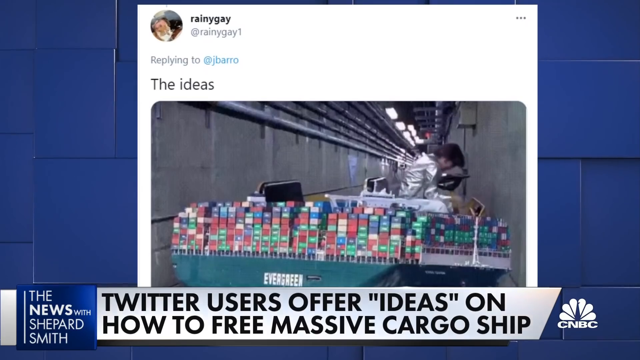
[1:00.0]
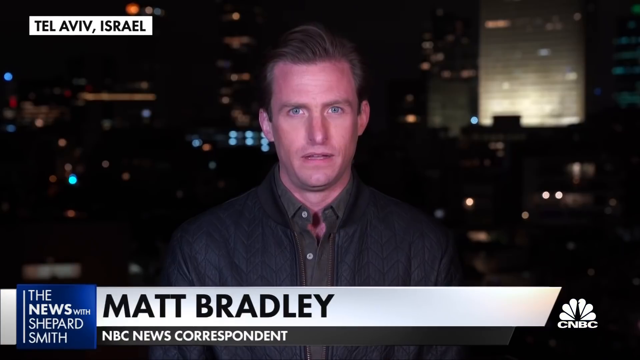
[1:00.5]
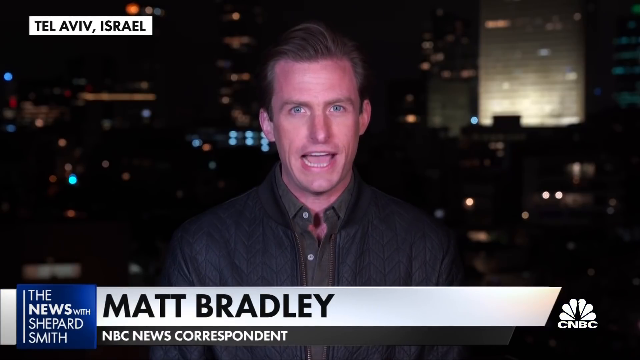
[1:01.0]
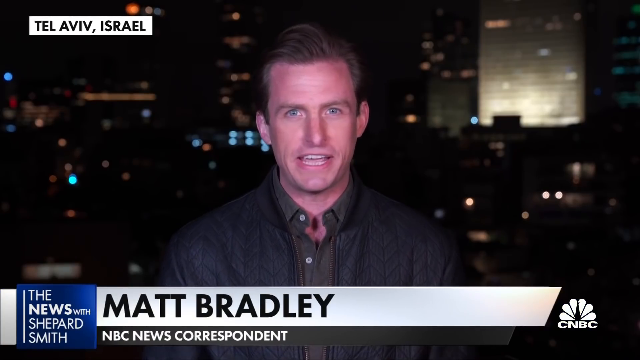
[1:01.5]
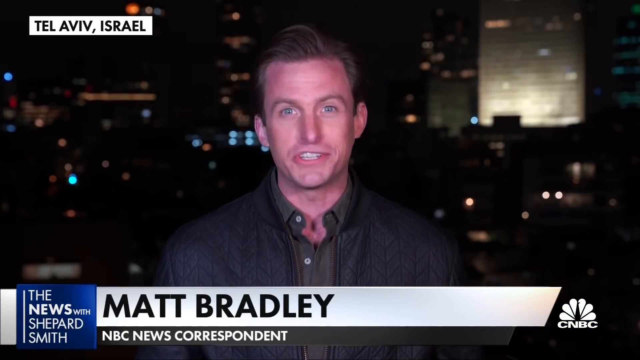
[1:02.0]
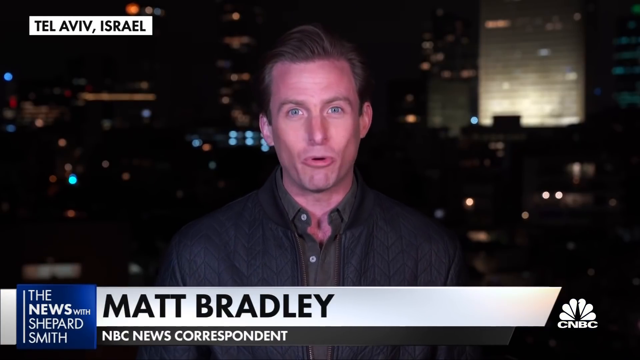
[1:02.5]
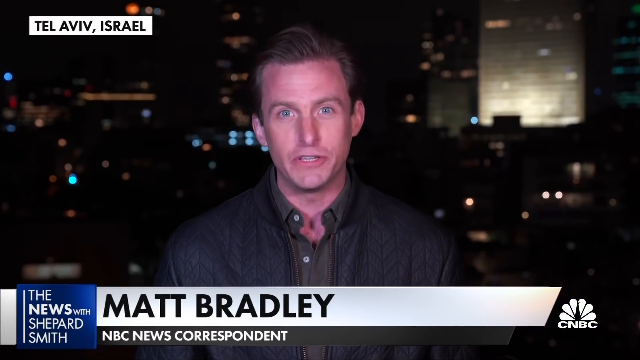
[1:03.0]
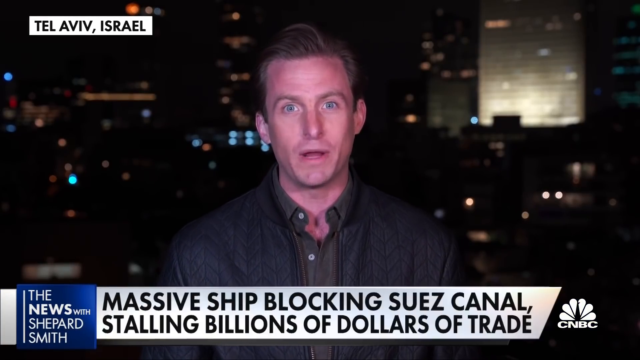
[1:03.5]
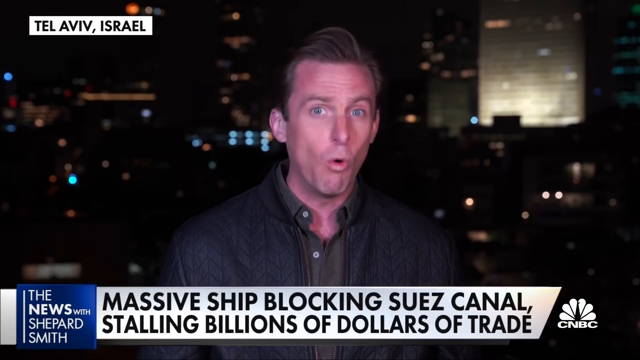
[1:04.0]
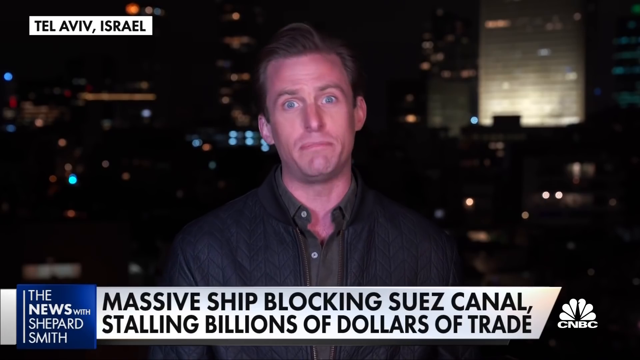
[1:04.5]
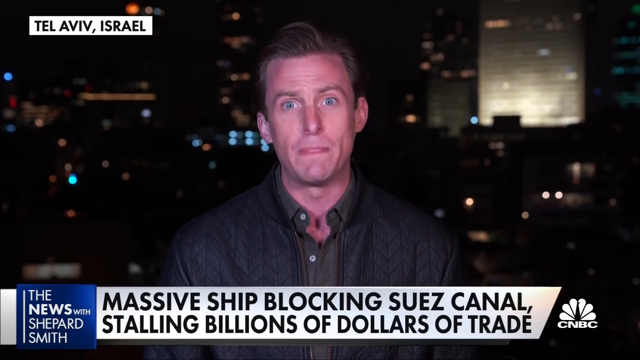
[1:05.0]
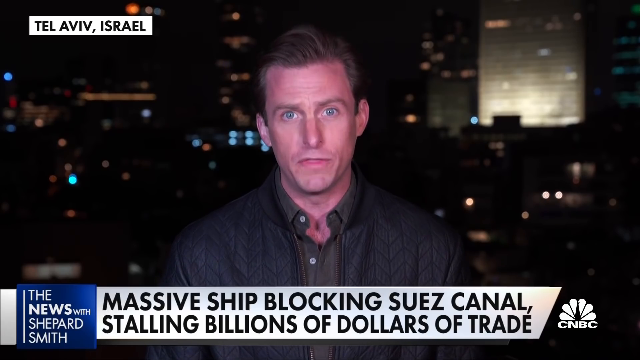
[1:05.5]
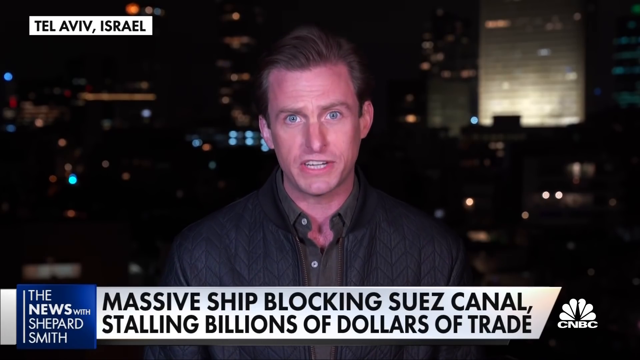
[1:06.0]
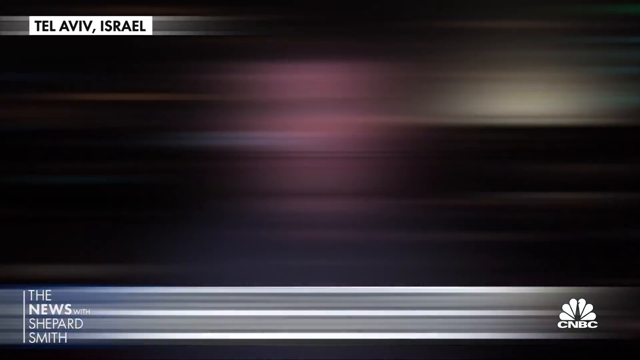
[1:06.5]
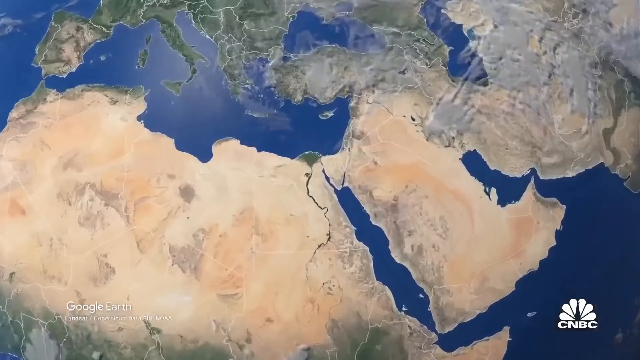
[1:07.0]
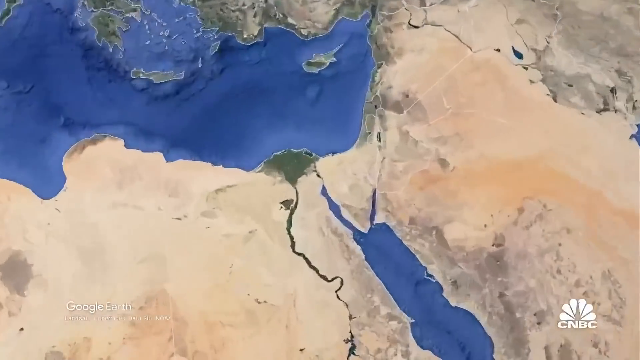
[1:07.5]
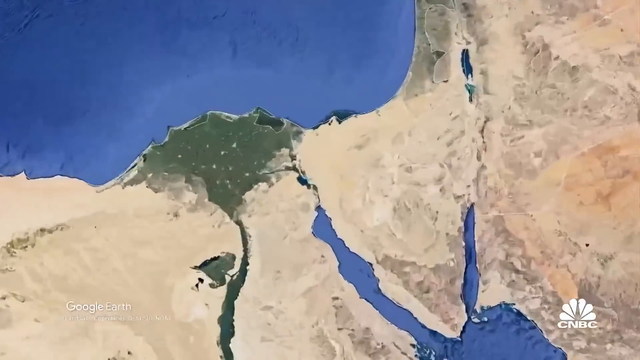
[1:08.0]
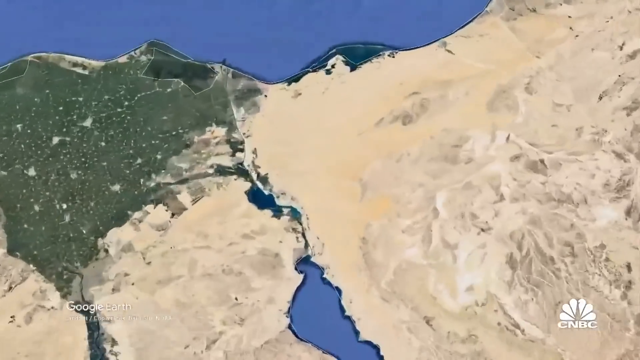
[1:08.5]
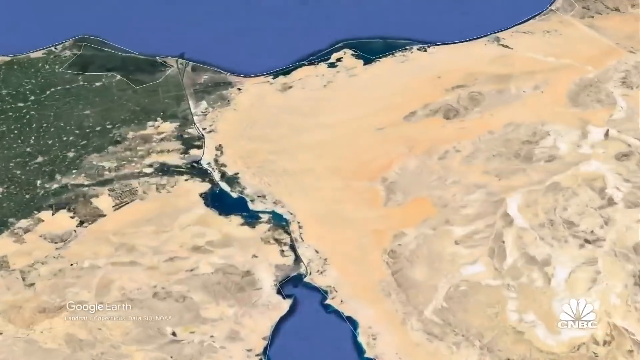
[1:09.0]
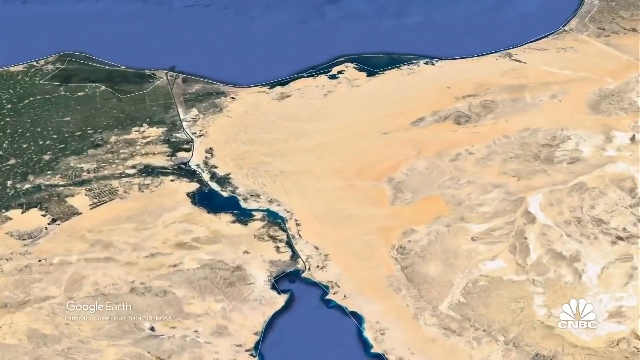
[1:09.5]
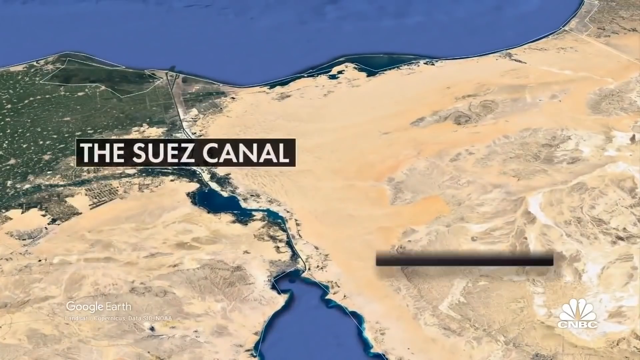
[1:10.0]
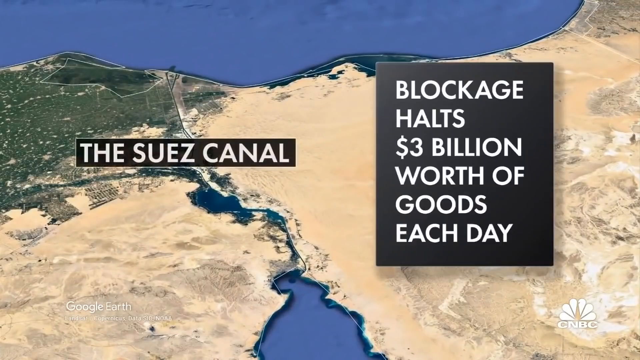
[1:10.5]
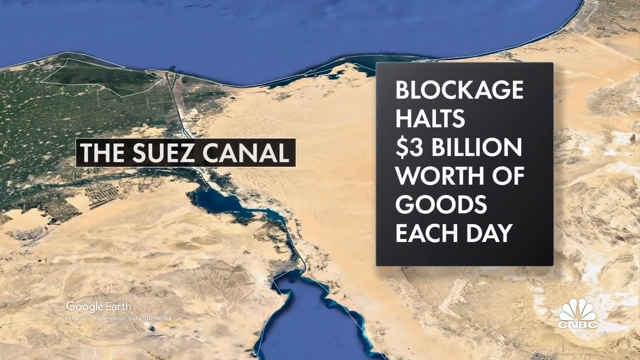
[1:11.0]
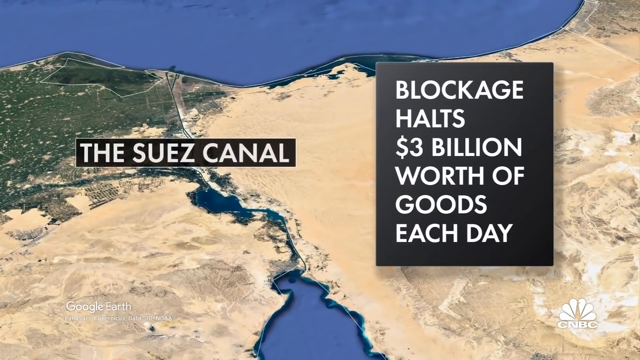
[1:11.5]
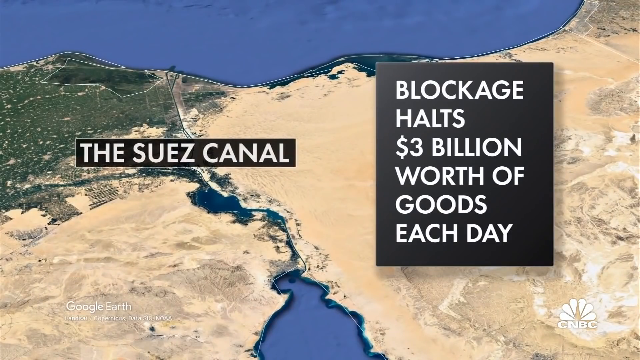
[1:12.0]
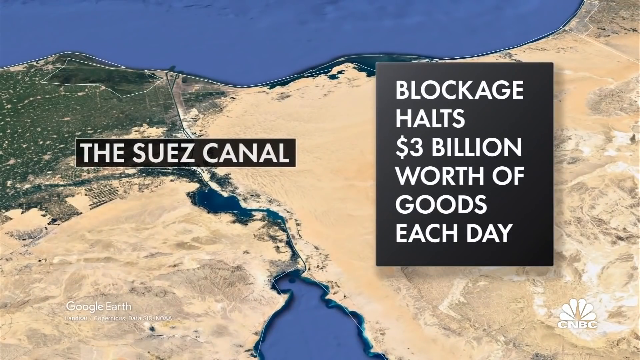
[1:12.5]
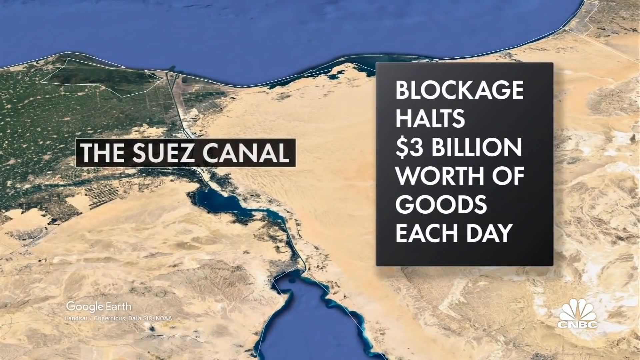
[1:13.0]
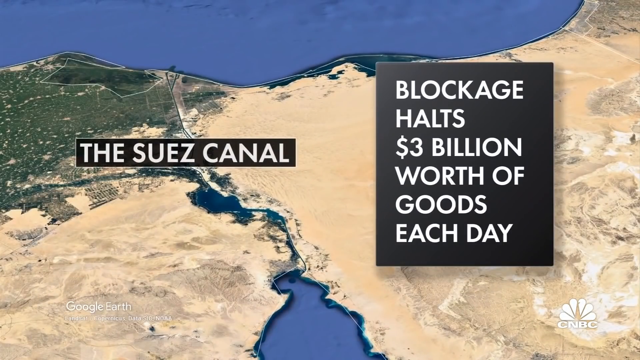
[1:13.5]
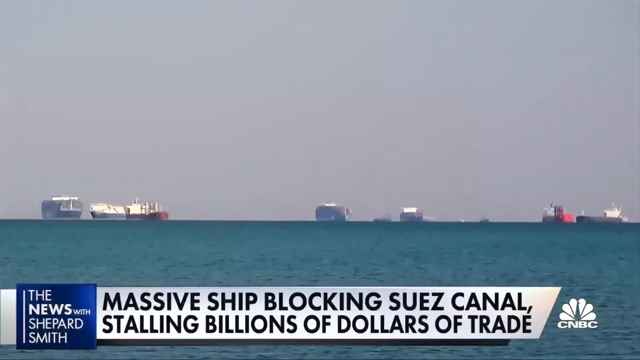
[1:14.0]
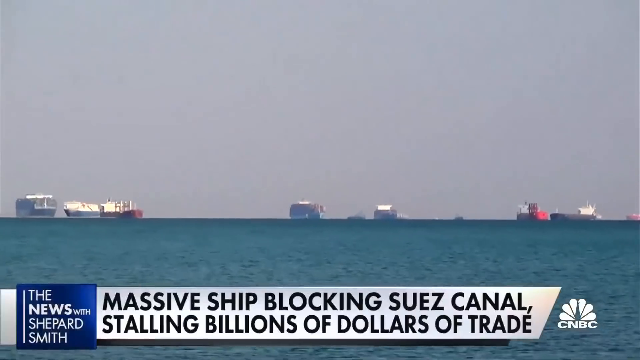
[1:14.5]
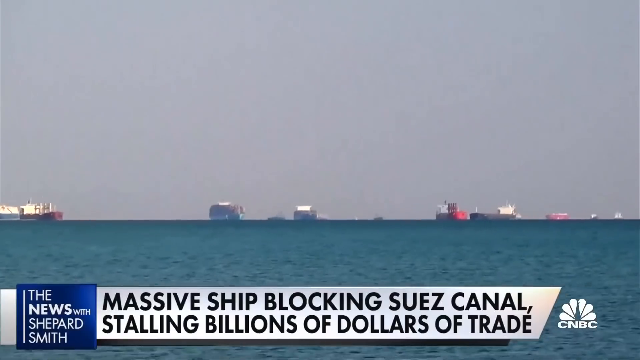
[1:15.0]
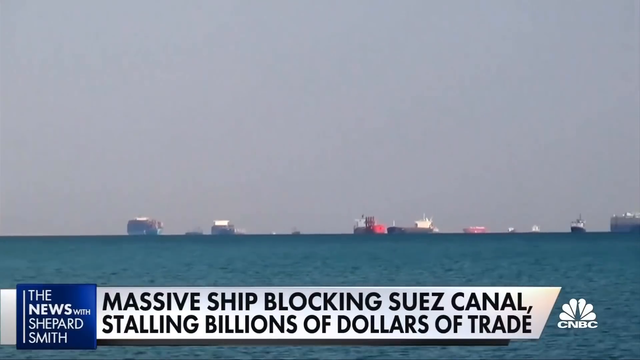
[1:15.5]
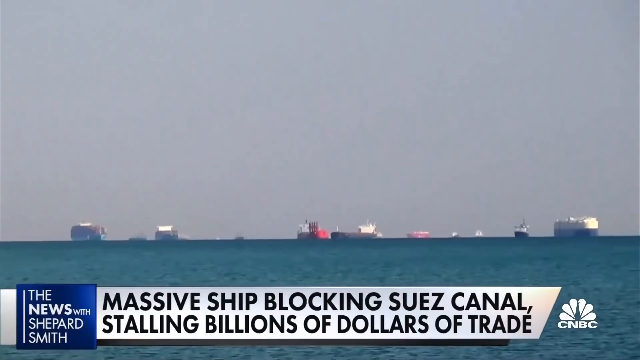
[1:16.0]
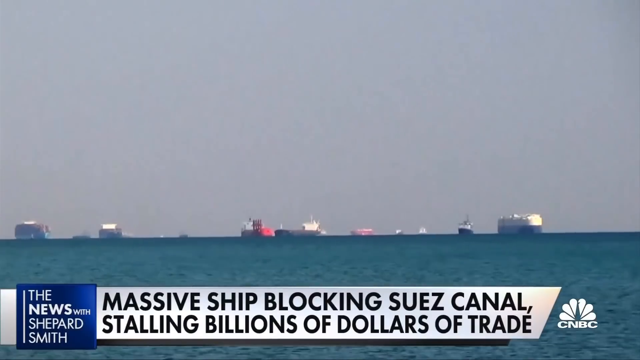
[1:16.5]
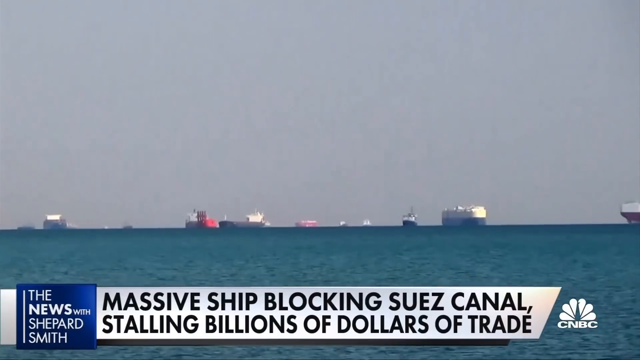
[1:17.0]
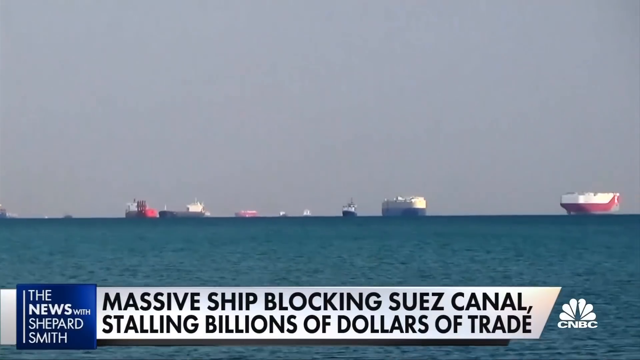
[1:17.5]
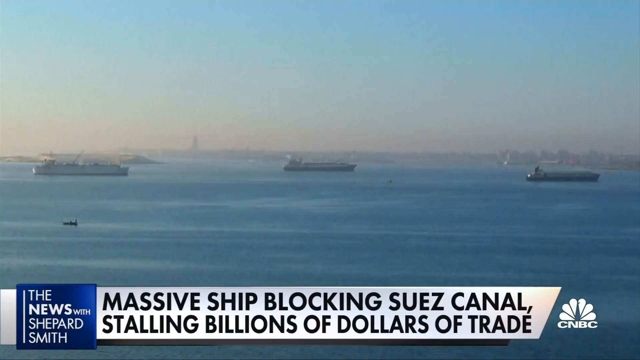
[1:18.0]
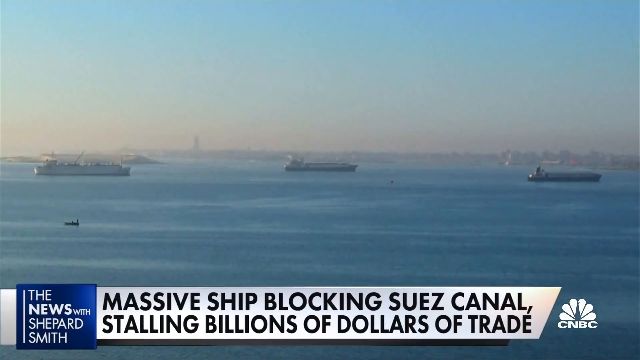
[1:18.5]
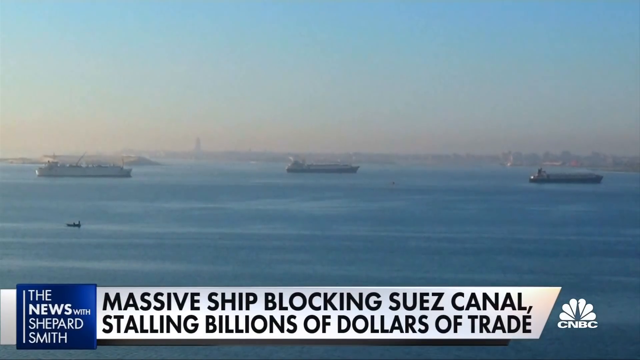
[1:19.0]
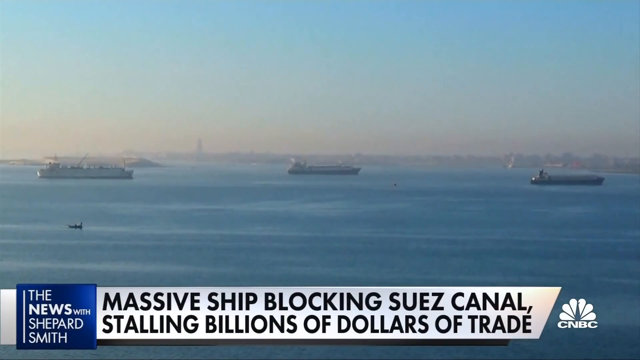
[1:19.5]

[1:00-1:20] The Austin Powers image remains briefly, with the CNBC logo in the bottom right corner. The video then cuts to a man in Tel Aviv, Israel, where it is nighttime. A city is in the background, with lights on in some of the taller buildings and another building on the right lit up by spotlights. The man, Matt Bradley, is white and wears a brown or black jacket with a brown shirt. The video pauses on him for a moment and seems frozen. Next, a CGI satellite view zooms in on the Suez Canal, with Egypt on the left and Israel on the right. White text on a black background reads "Suez Canal", and on the right side text reads "Blockage halts three million dollars worth of goods each day". The view holds there, then shows a sea, apparently the Red Sea, with many cargo ships floating and waiting, as the camera pans from left to right.